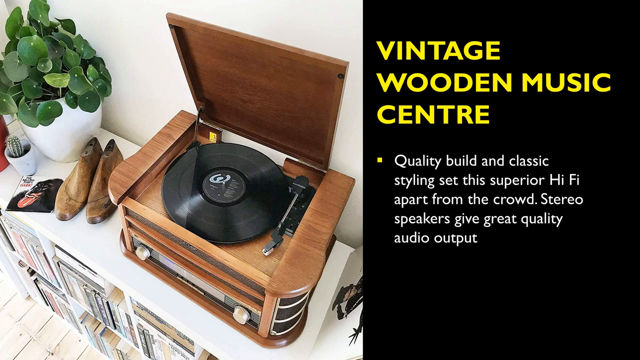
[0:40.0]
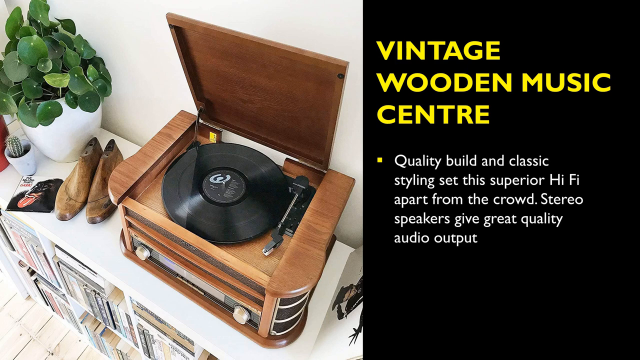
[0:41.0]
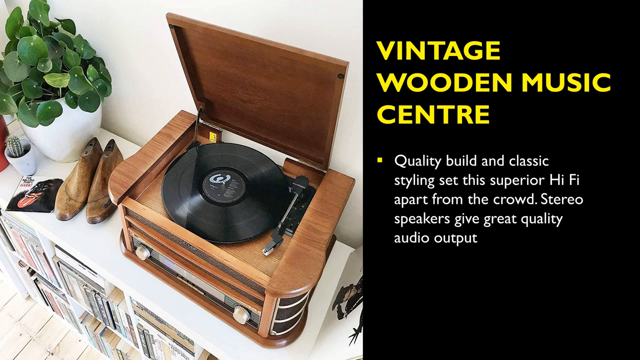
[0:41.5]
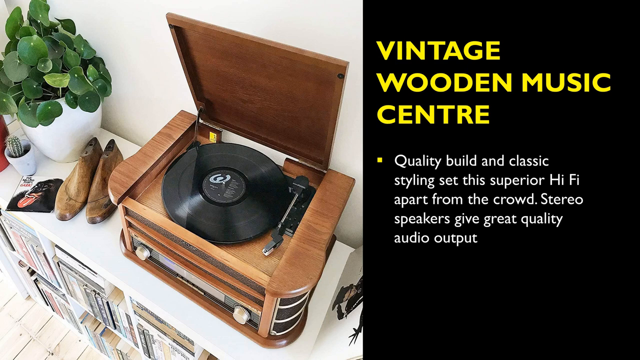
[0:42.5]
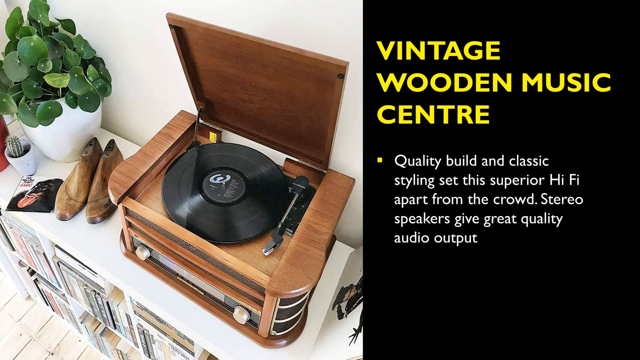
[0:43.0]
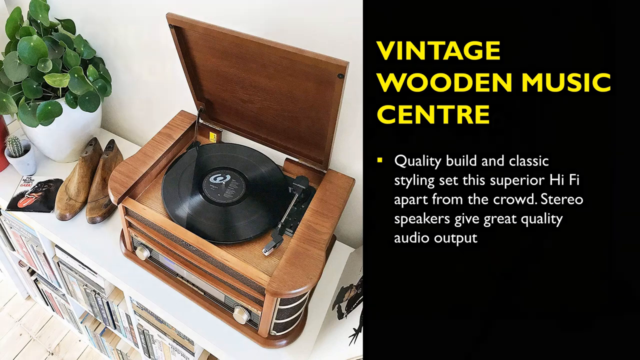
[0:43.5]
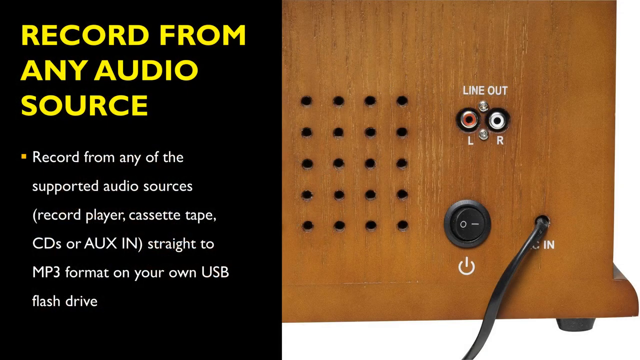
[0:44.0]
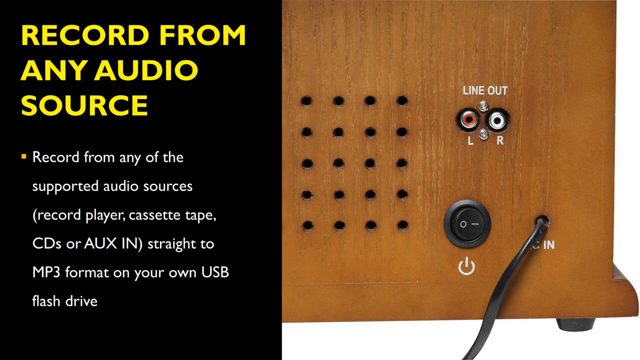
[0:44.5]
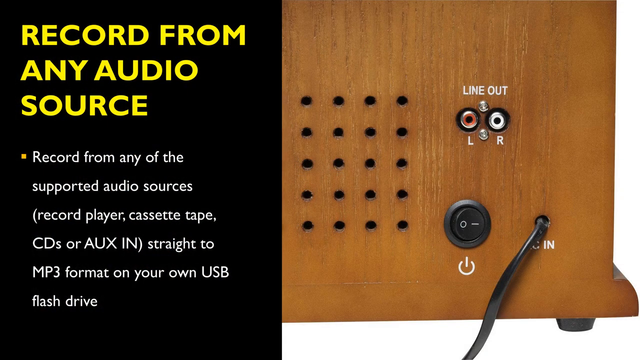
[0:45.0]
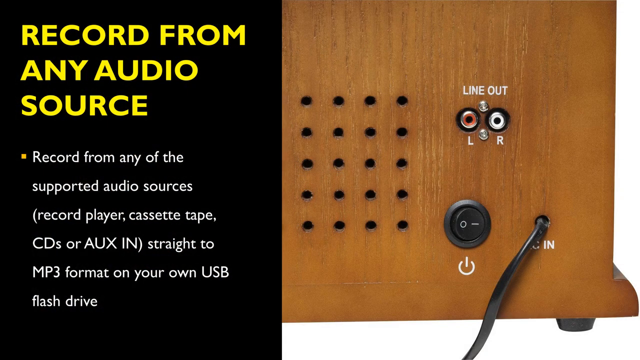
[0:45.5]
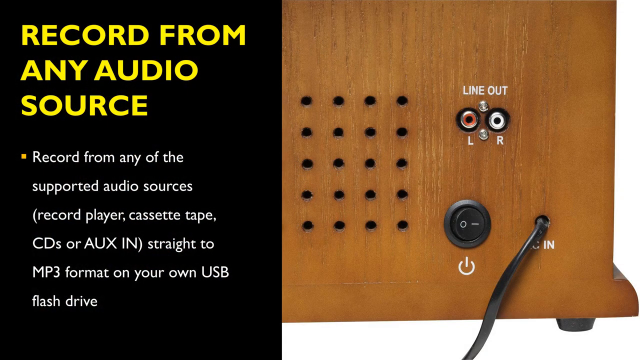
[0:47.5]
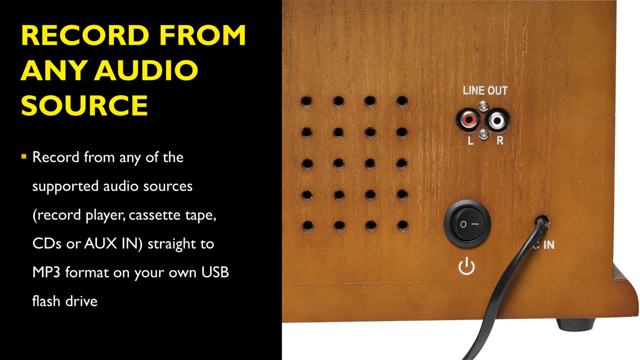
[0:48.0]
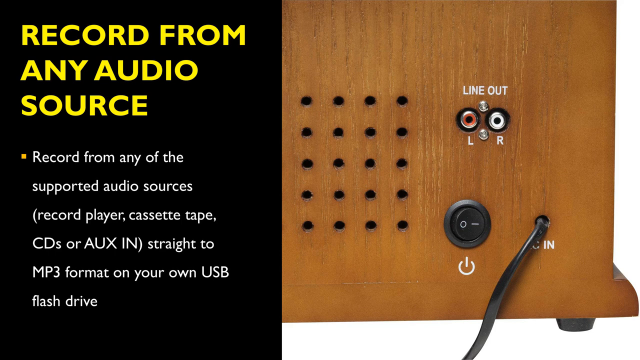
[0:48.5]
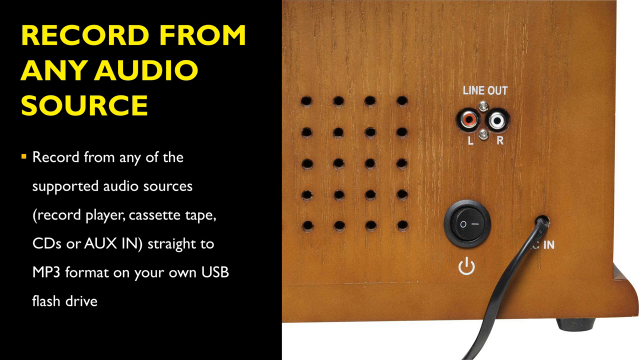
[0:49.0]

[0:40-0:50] On the right side, yellow text reads "Vintage Music Center". White text below begins "Quality Build" and mentions speakers that give "great quality audio outputs". The next page says "record from any of the supported audio sources", listing record player, cassette tape and AUX, and recording to MP3 format on a USB flash drive.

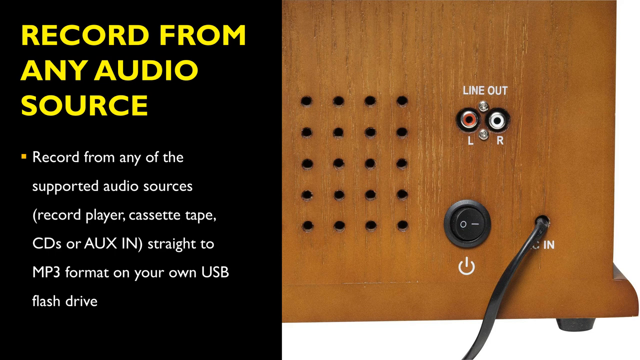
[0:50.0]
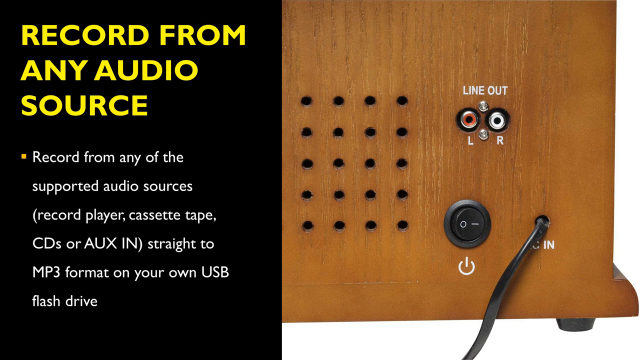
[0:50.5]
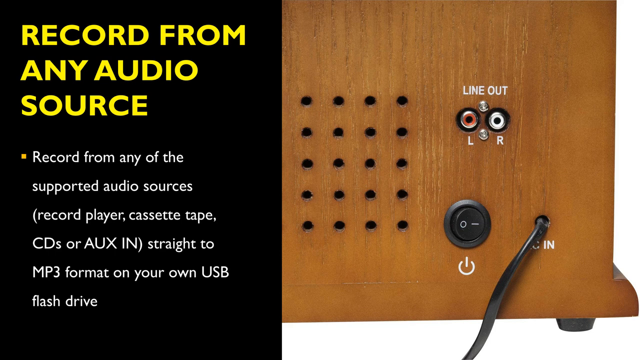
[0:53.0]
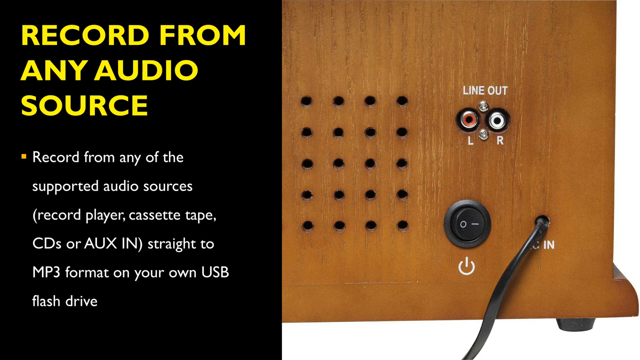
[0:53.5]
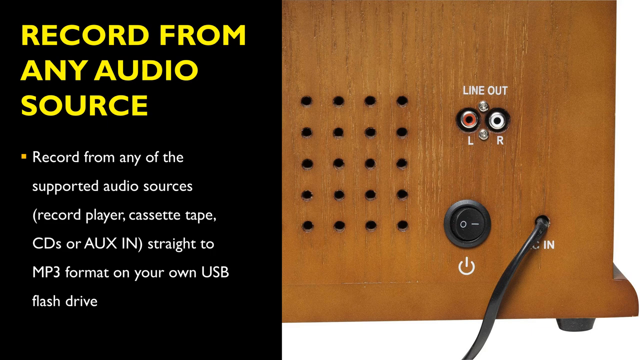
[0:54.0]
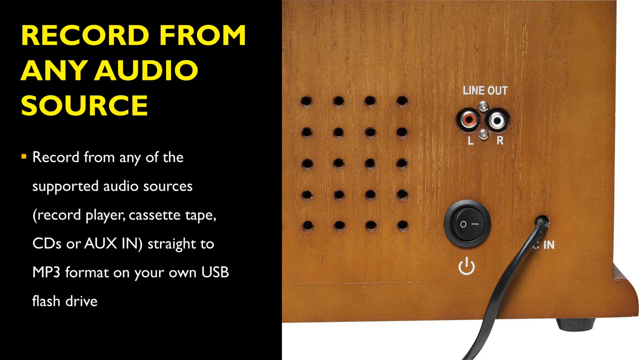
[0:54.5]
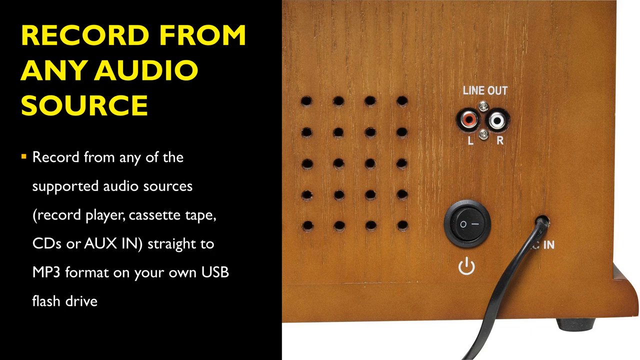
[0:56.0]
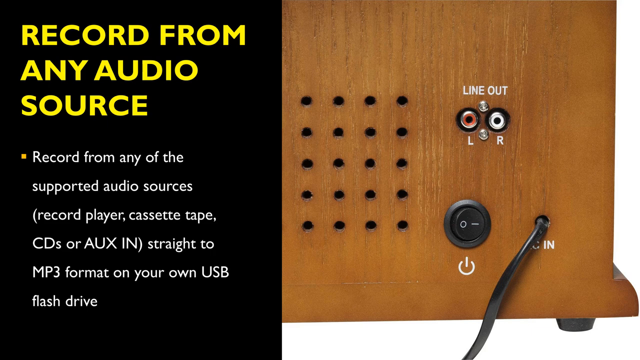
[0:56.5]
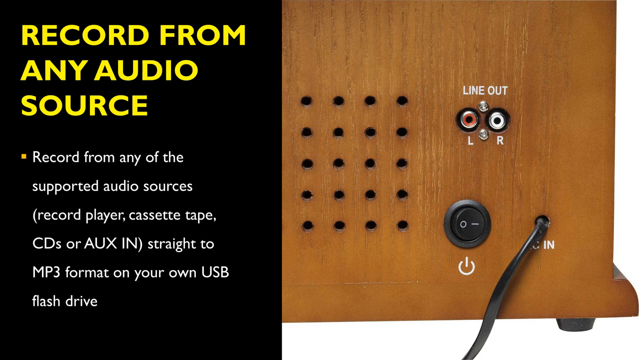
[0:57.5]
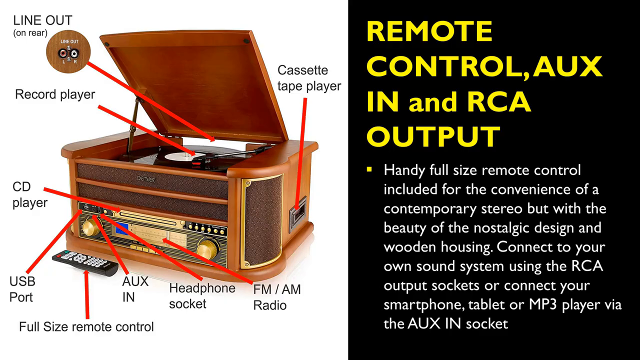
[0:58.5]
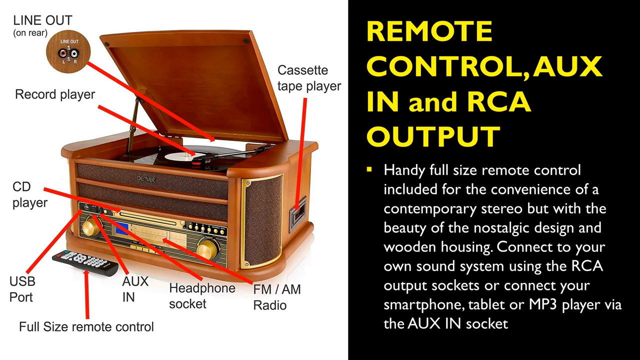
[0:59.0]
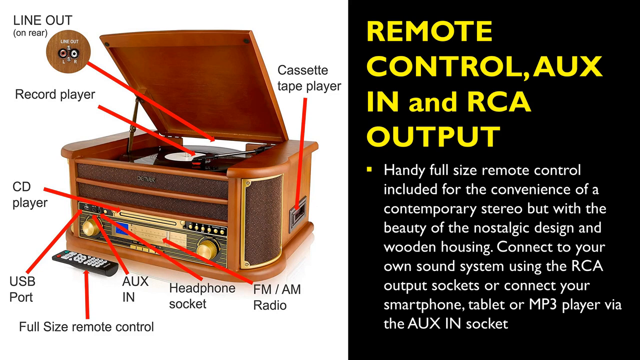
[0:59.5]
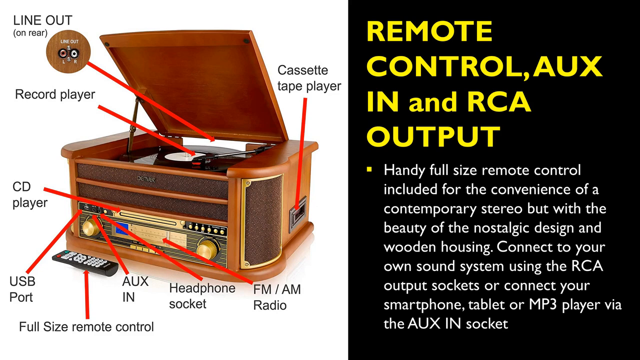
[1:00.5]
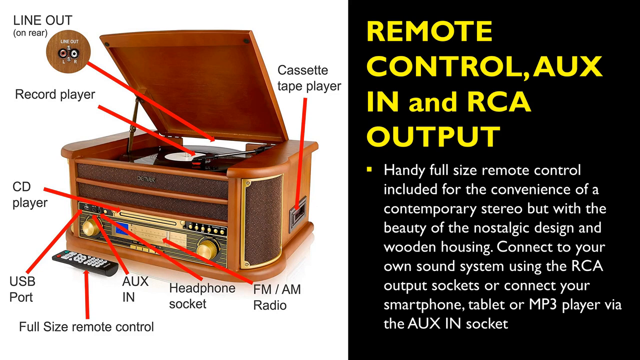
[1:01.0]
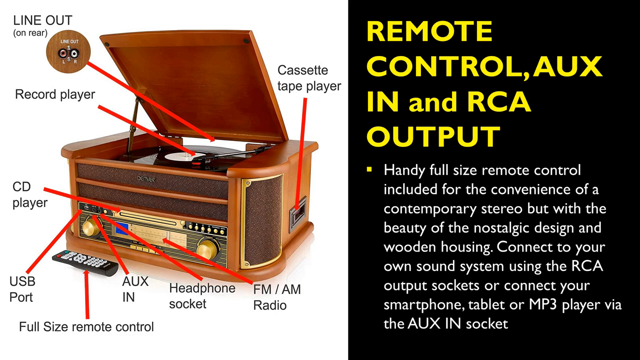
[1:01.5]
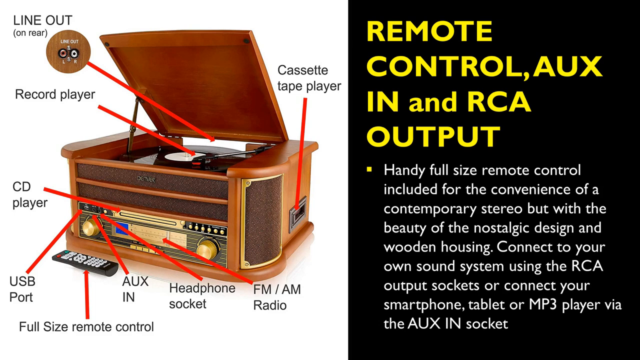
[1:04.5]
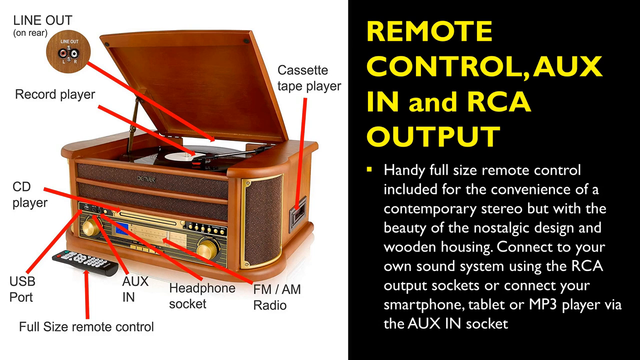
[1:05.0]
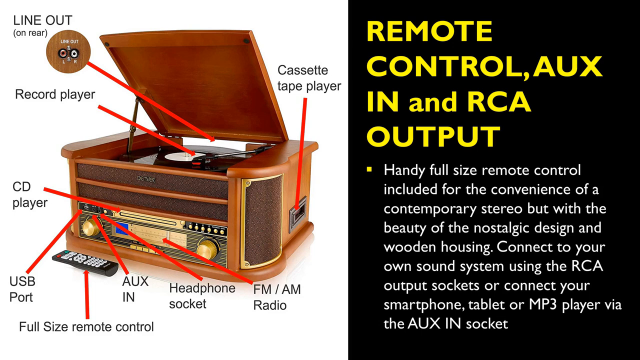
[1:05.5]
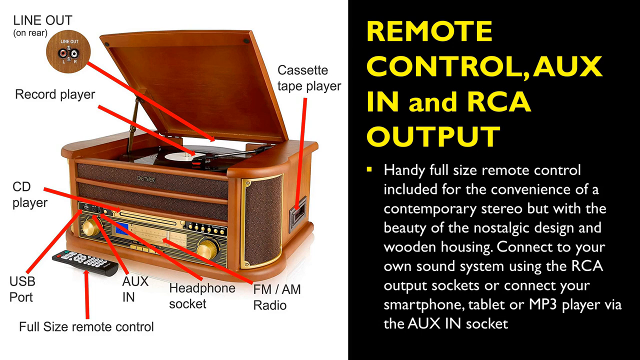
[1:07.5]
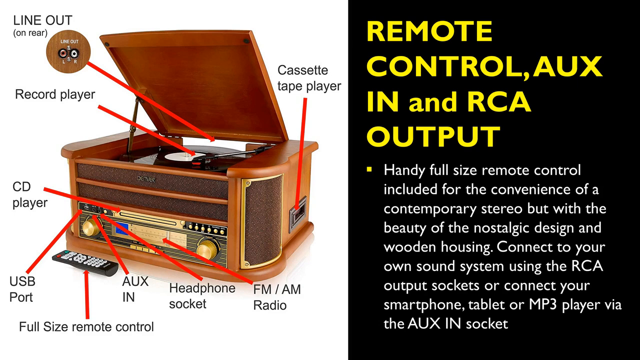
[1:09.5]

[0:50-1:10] On the left side, yellow text reads "record any audio source". Next to a yellow bullet point, white text reads "record from any other supported audio sources", and in parentheses "record player, cassette tape, CDs, or AUXIN", straight to MP3 format with a USB flash drive. A zoomed-in image of the back of the product is outlined in white; it has two circular holes labeled "LR", apparently meaning left and right, and a power button is visible. This page stays on screen for quite some time. The next page shows an image labeling the parts of the product: where the cassette tape goes, and, from the bottom, lines pointing to the FM/AM radio, the headphone socket and the USB port, with the remote control and the AUX and RCA output on the right side.